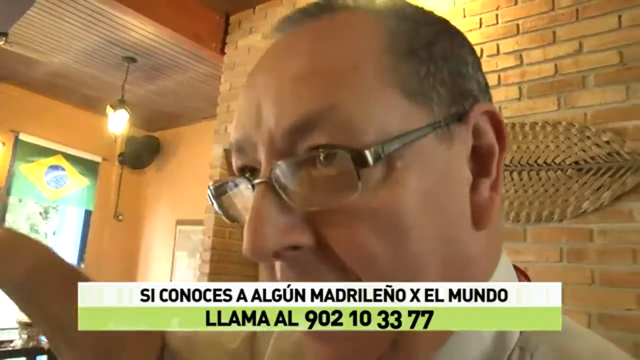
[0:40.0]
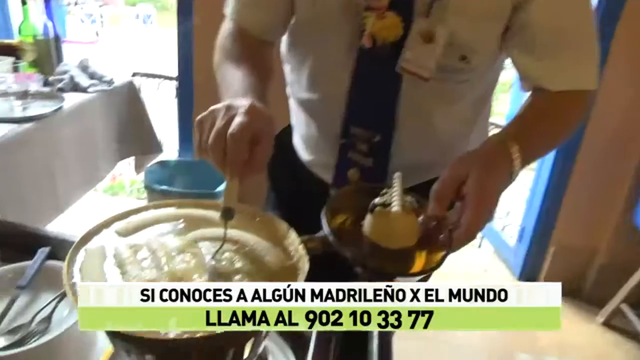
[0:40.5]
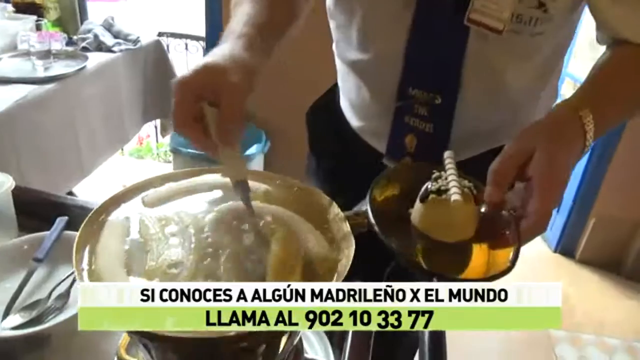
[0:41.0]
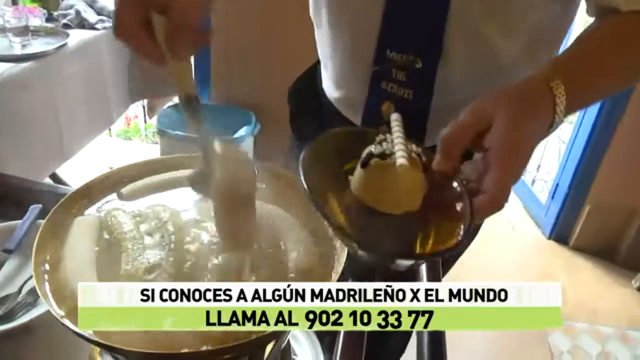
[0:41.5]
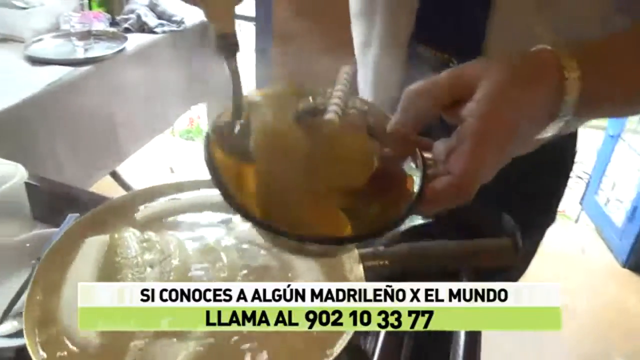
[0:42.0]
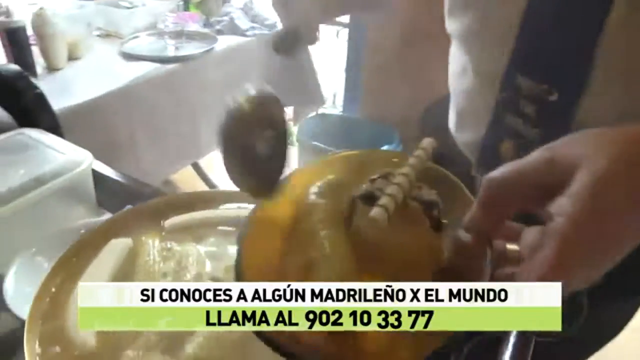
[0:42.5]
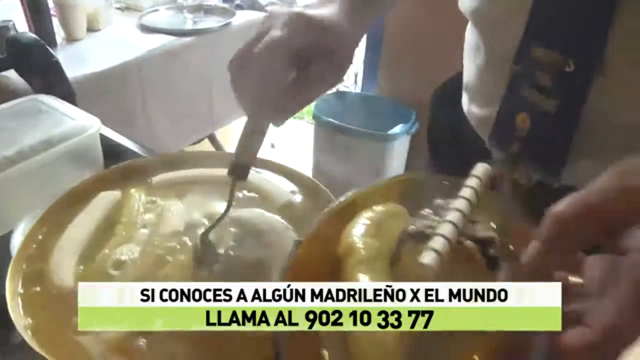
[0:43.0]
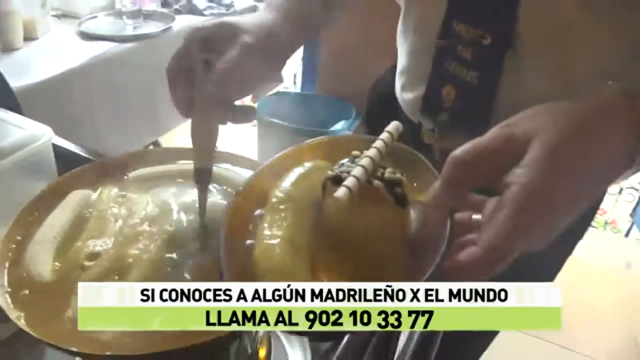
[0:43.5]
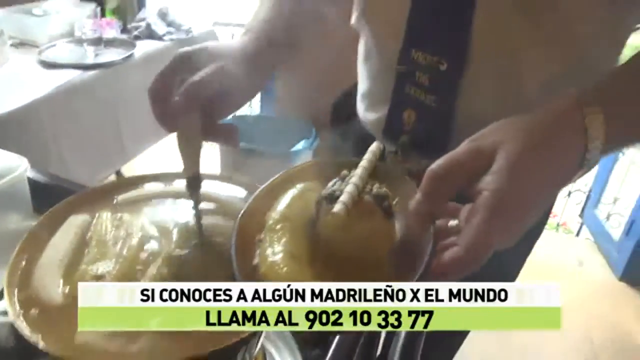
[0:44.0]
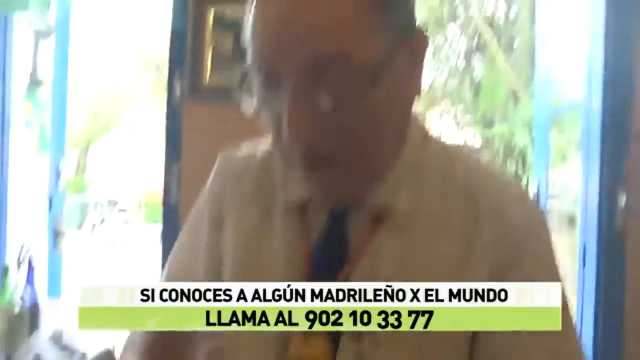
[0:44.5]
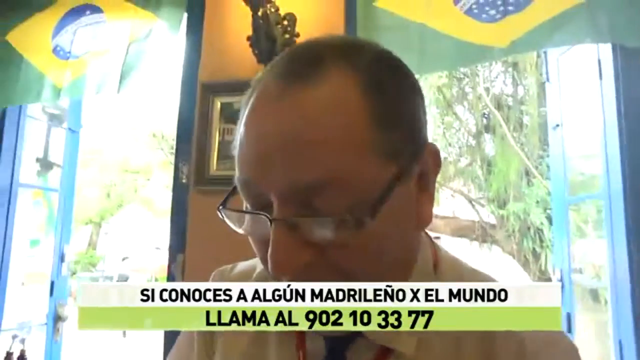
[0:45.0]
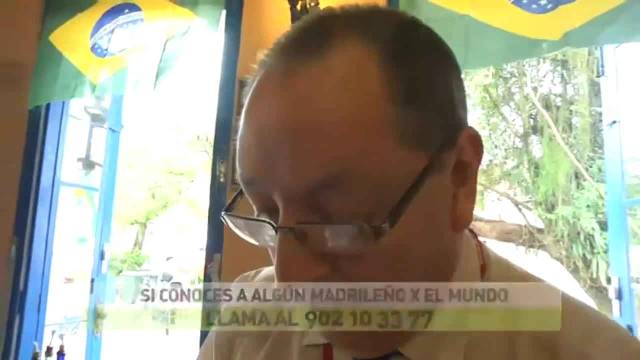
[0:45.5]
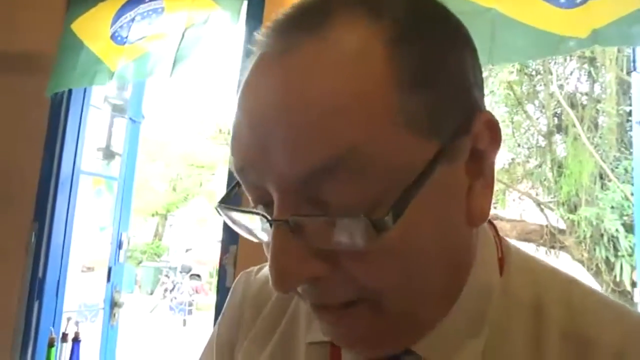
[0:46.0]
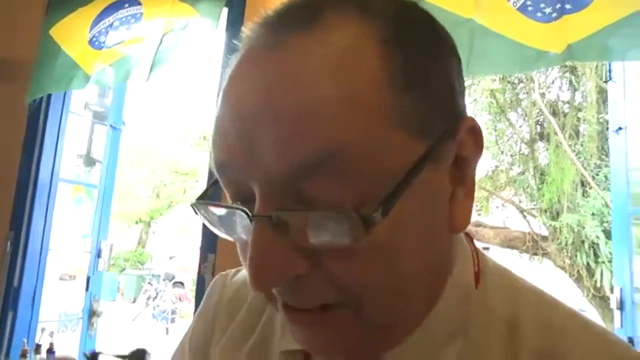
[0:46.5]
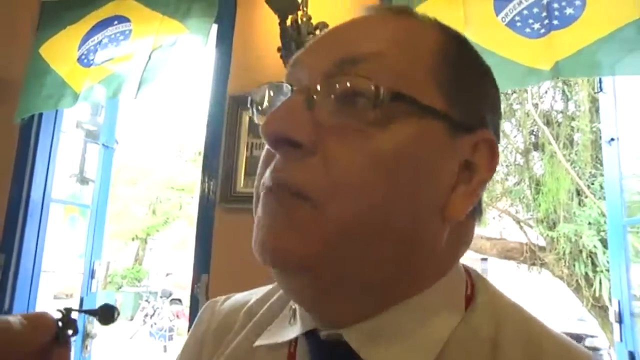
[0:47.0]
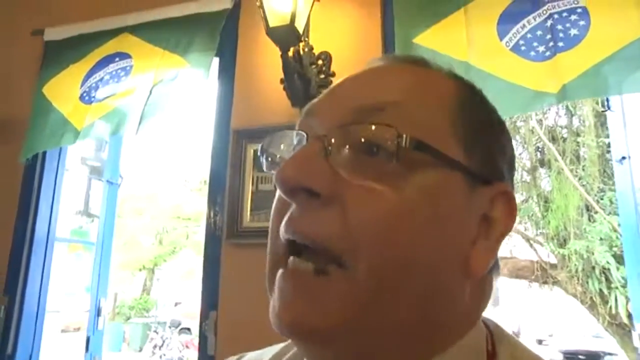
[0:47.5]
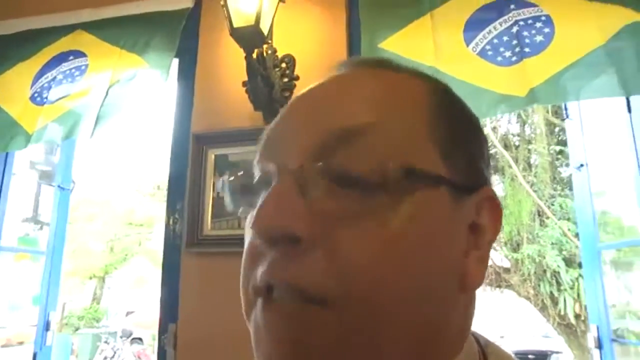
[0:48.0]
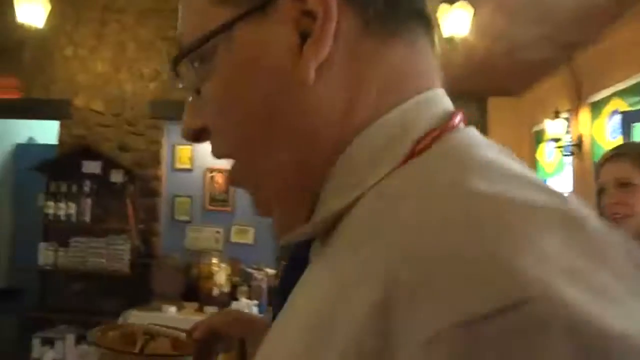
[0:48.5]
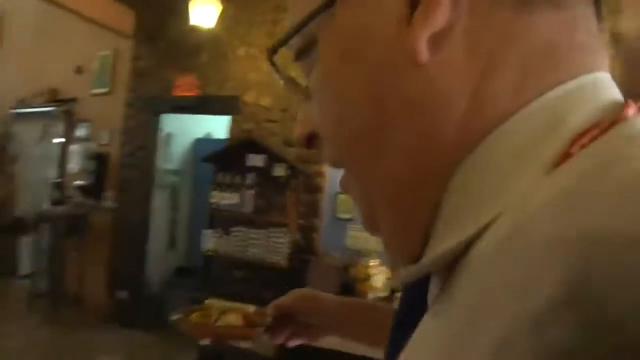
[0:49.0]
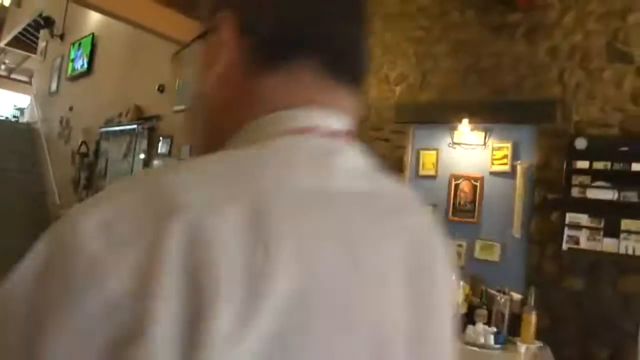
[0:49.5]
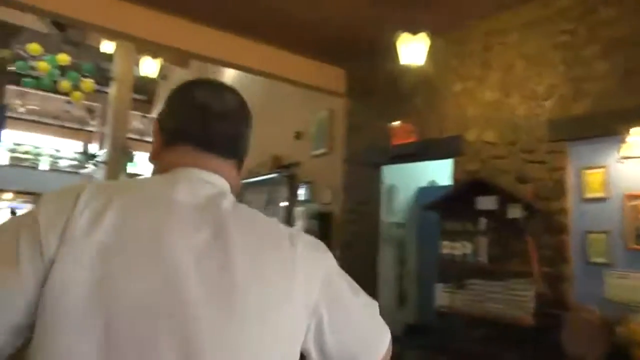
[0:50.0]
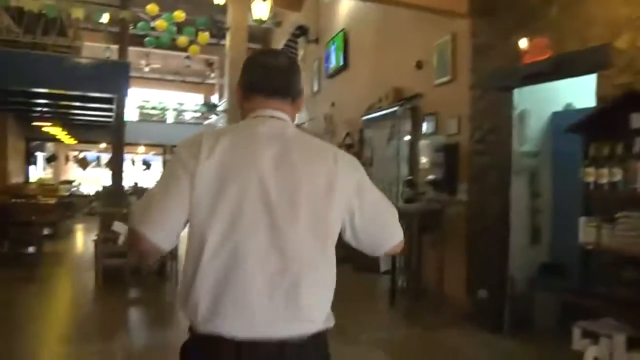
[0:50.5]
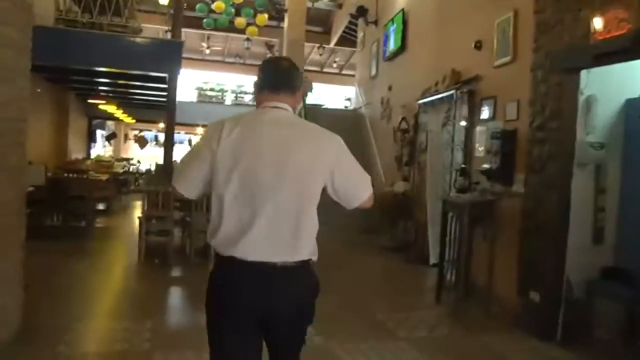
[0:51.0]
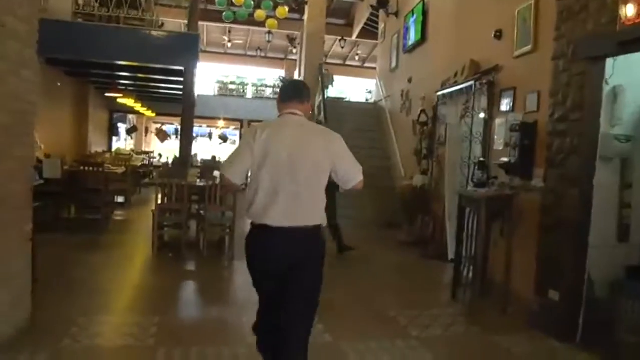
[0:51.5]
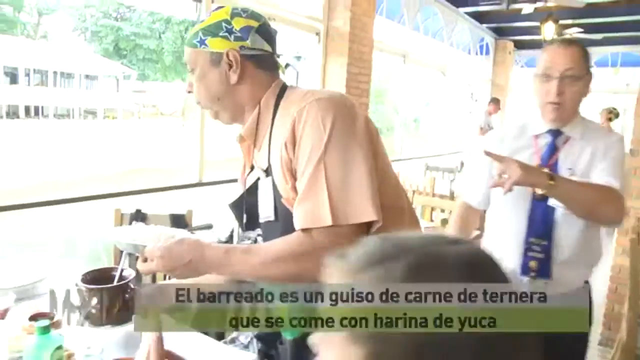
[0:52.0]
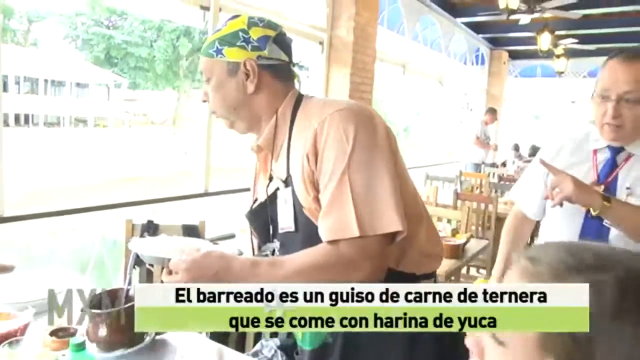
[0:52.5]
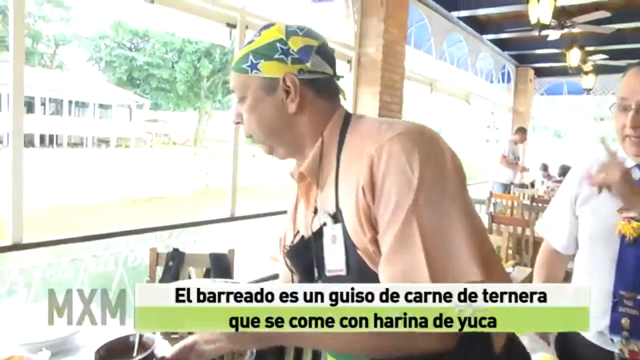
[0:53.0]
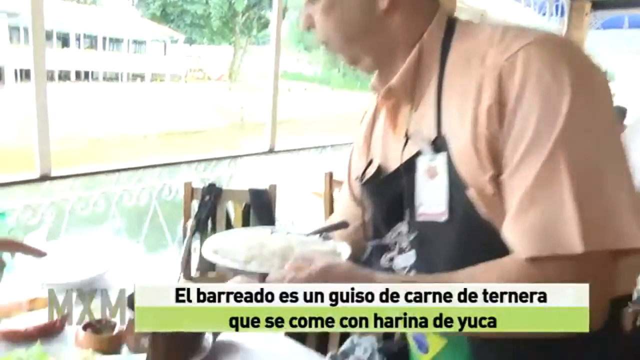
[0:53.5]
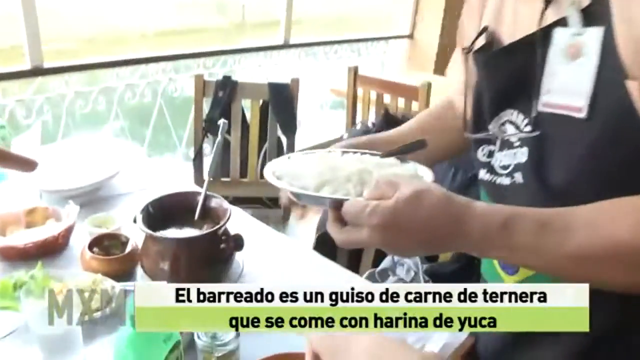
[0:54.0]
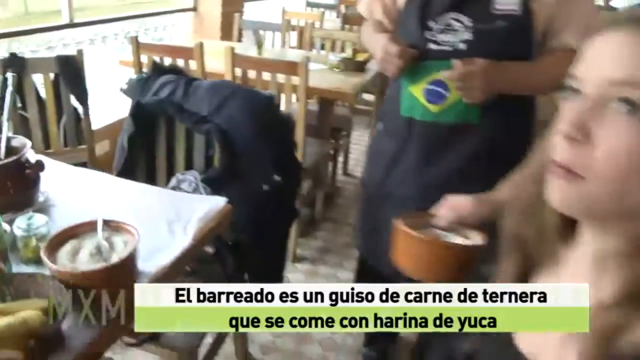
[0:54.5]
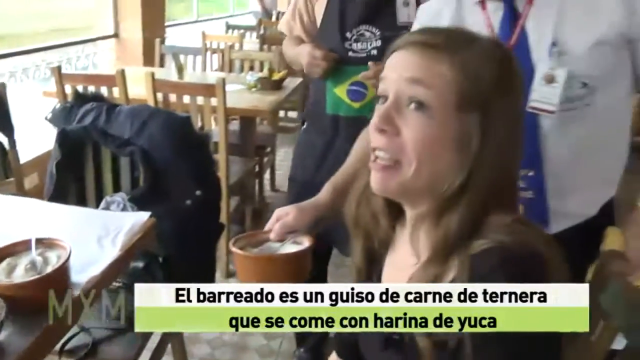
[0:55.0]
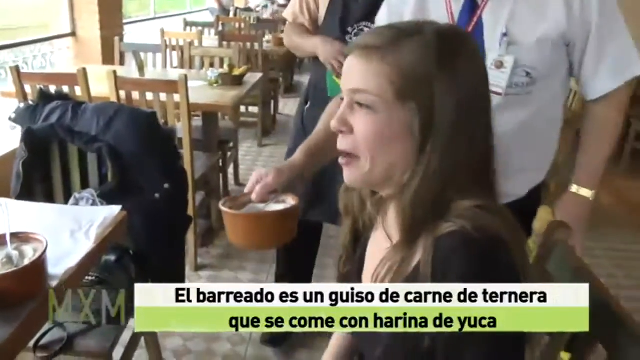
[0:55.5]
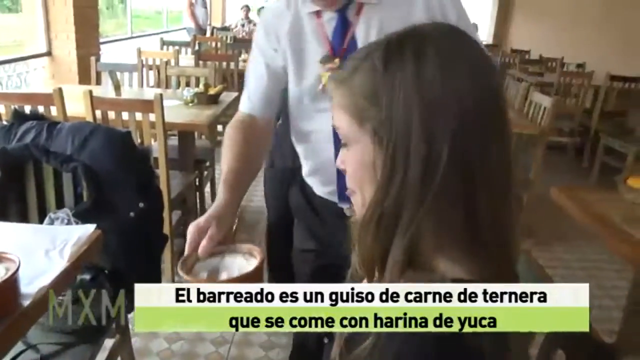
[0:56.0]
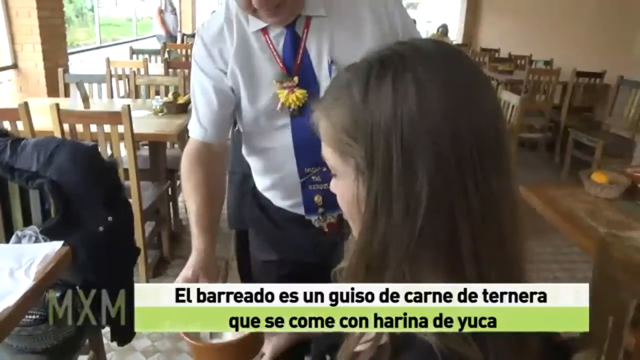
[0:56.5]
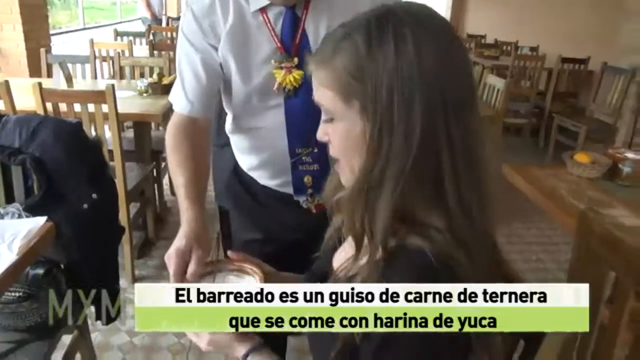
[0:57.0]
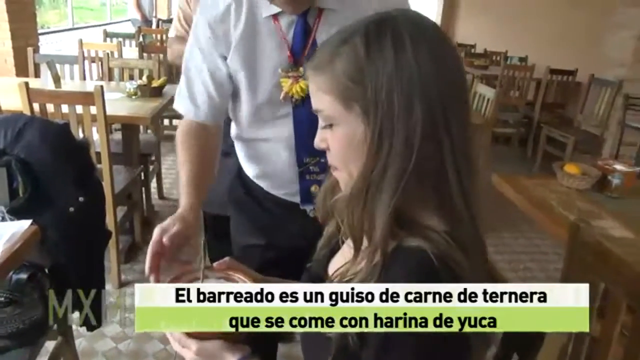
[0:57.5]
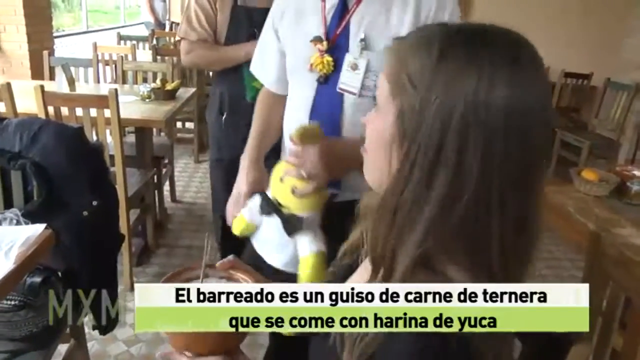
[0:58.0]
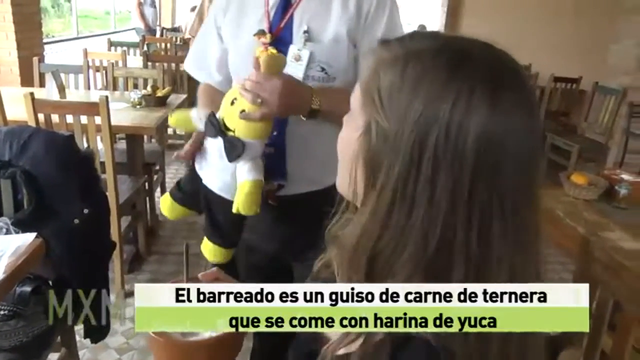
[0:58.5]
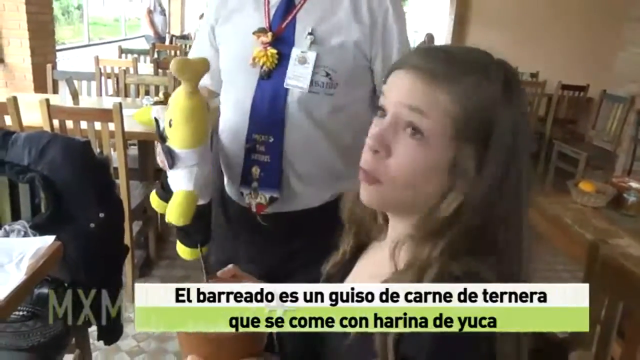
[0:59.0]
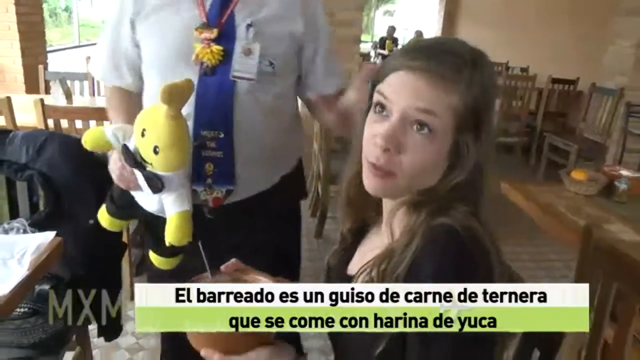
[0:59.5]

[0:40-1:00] The man pulls items out of a dish, and it appears to be a dessert of some kind. He brings it to a table and serves it to the news host with a banana stuffed animal. The dessert seems to include chocolate, ice cream, and possibly banana. The banana looks like it was either boiling or sitting in hot water before being added to the rest of the dish.